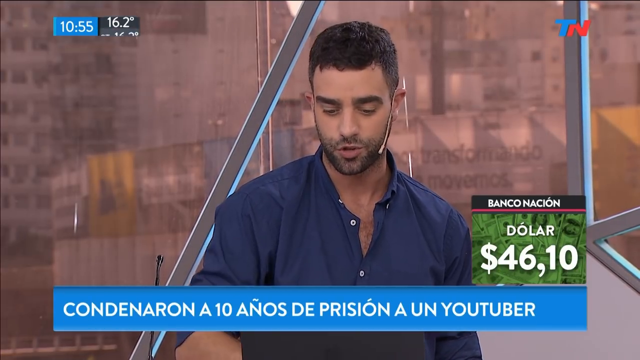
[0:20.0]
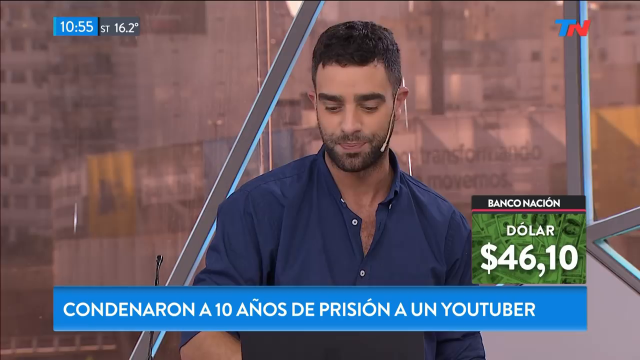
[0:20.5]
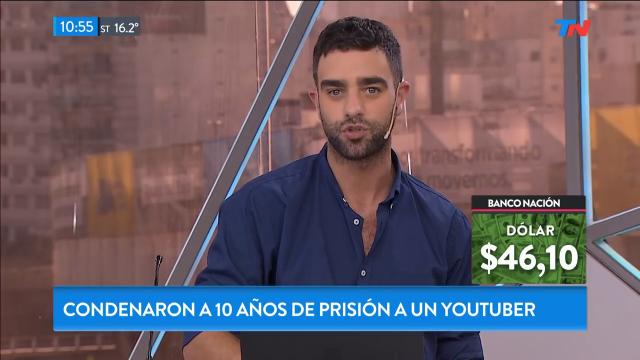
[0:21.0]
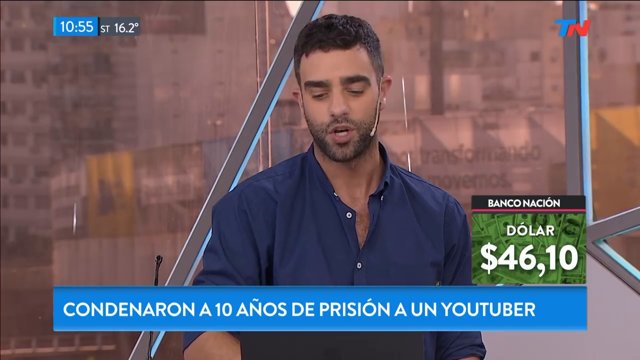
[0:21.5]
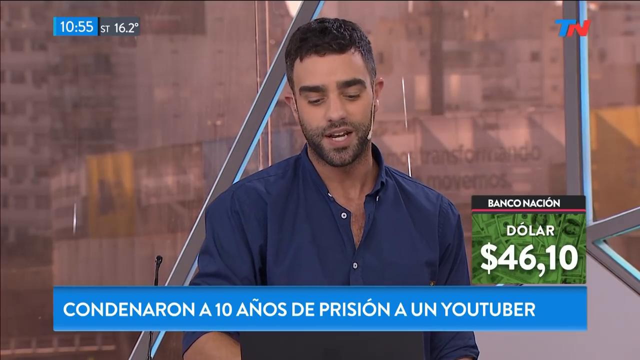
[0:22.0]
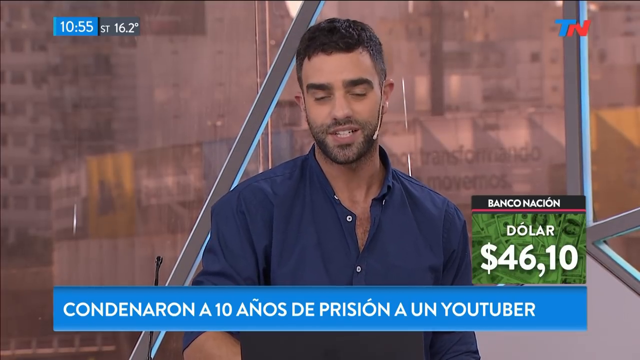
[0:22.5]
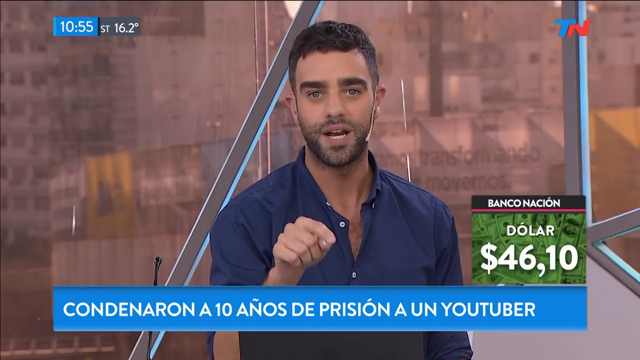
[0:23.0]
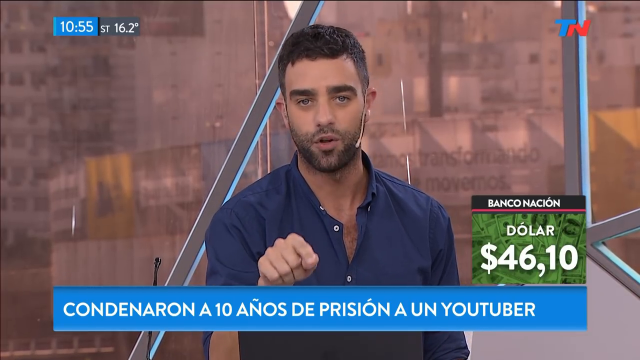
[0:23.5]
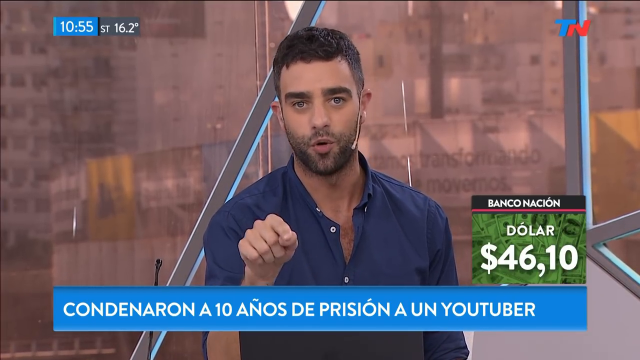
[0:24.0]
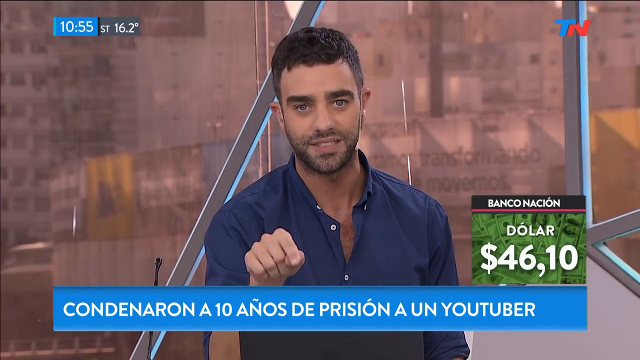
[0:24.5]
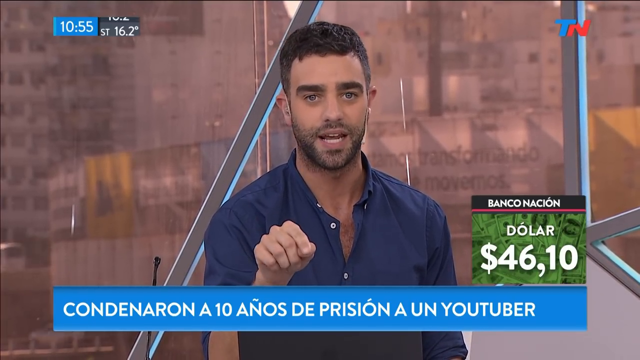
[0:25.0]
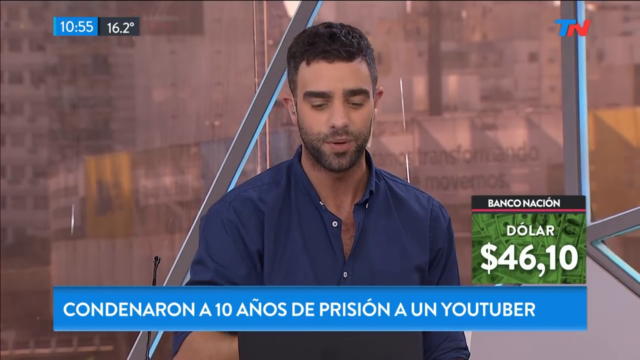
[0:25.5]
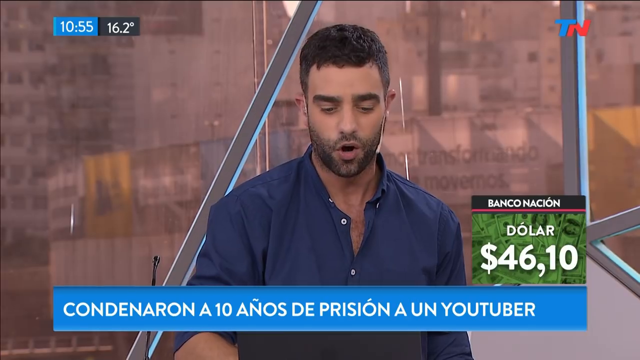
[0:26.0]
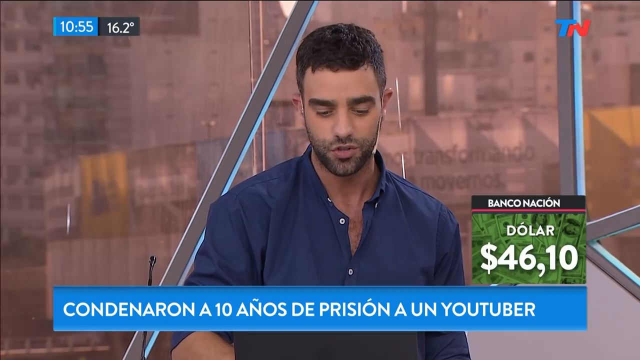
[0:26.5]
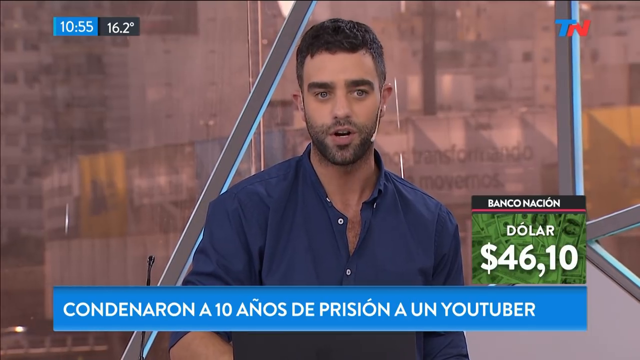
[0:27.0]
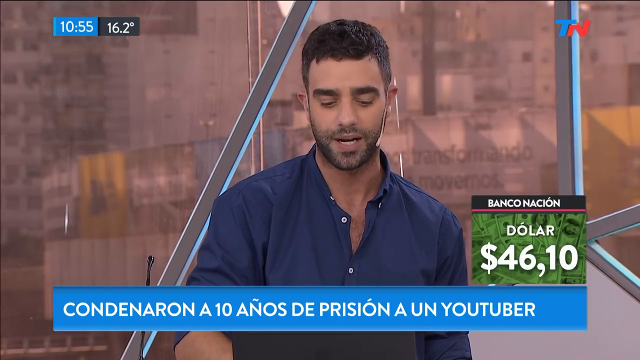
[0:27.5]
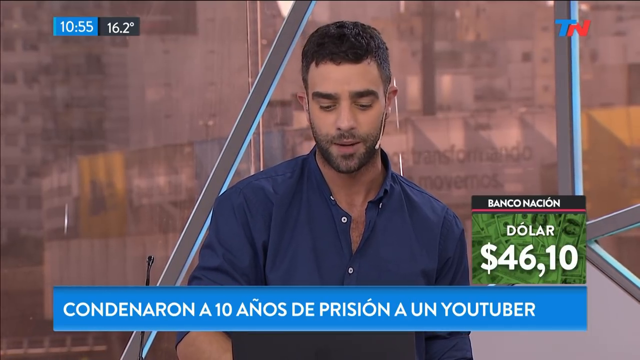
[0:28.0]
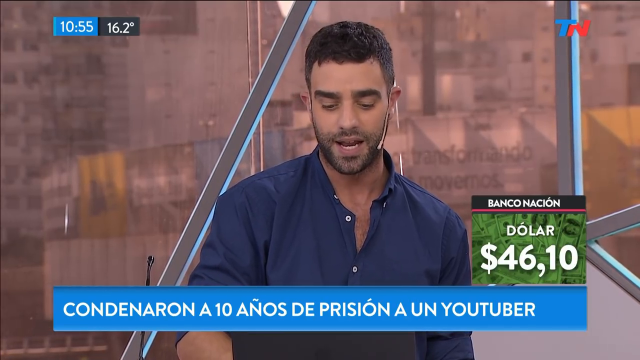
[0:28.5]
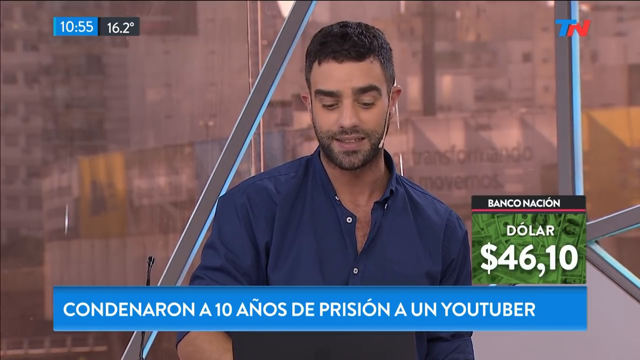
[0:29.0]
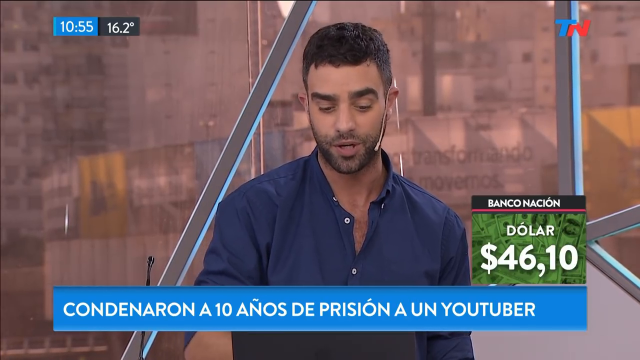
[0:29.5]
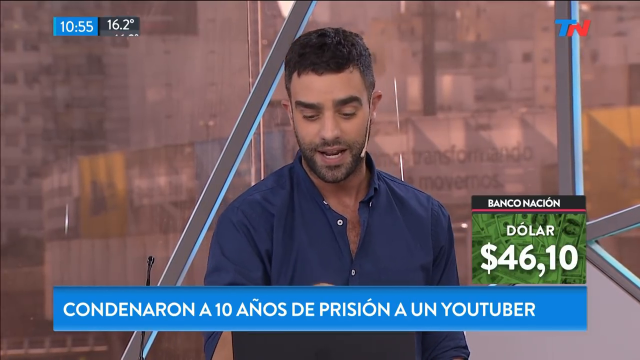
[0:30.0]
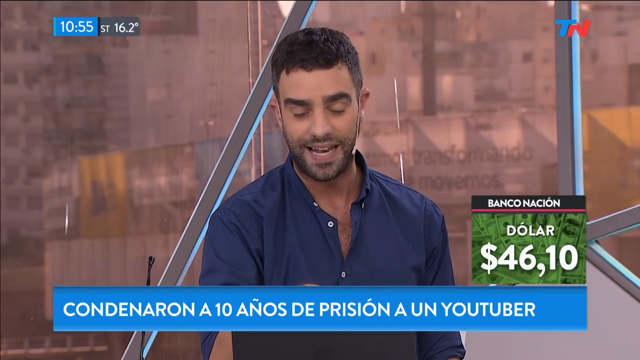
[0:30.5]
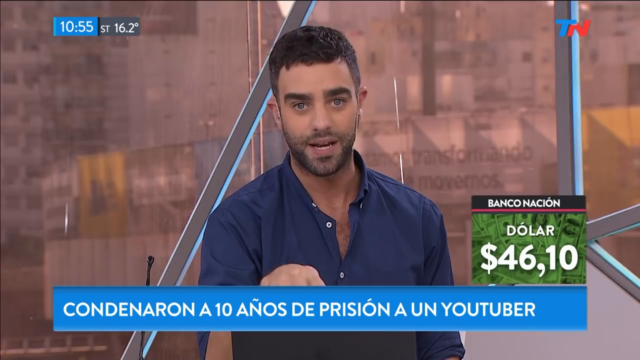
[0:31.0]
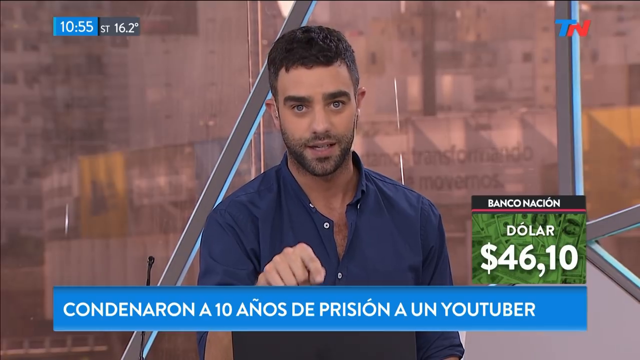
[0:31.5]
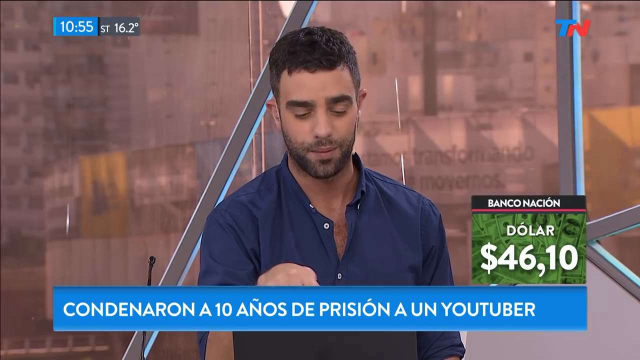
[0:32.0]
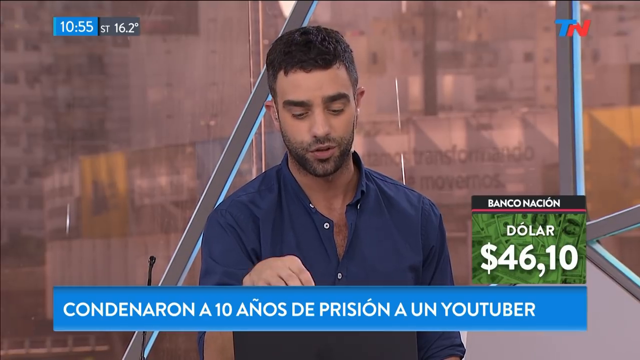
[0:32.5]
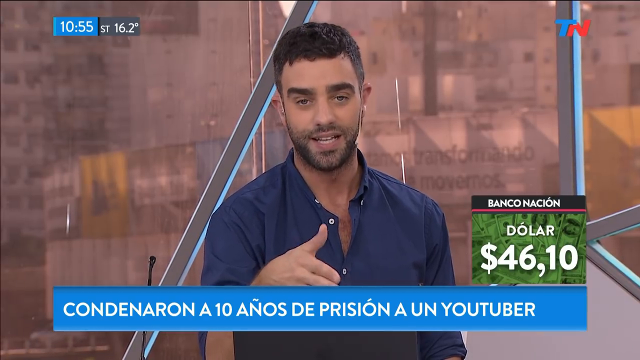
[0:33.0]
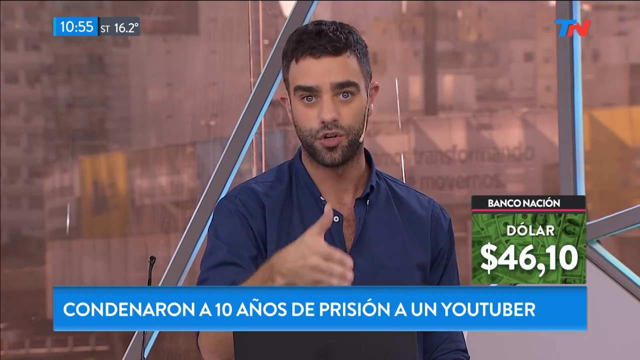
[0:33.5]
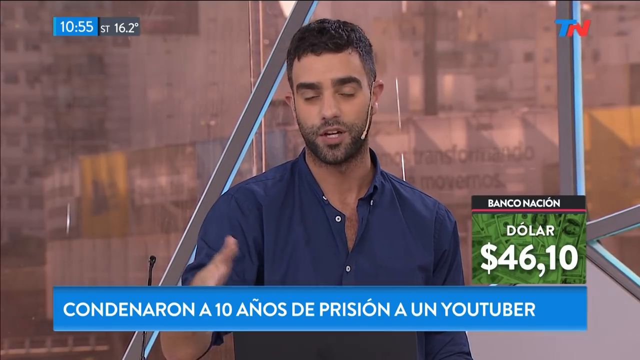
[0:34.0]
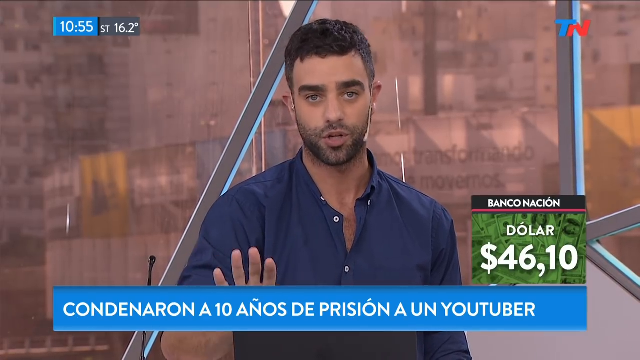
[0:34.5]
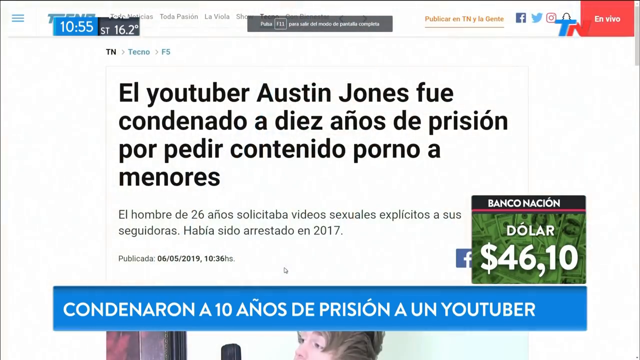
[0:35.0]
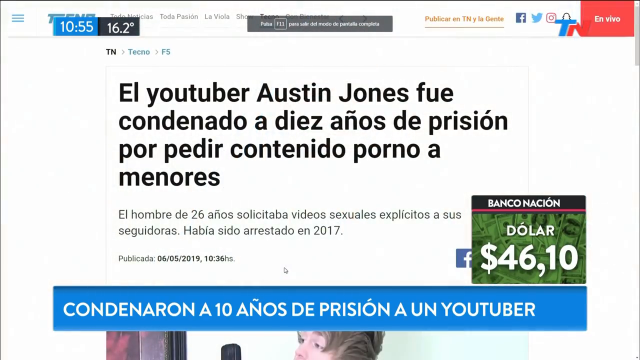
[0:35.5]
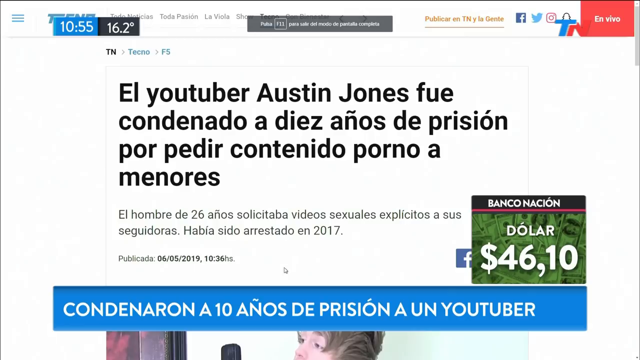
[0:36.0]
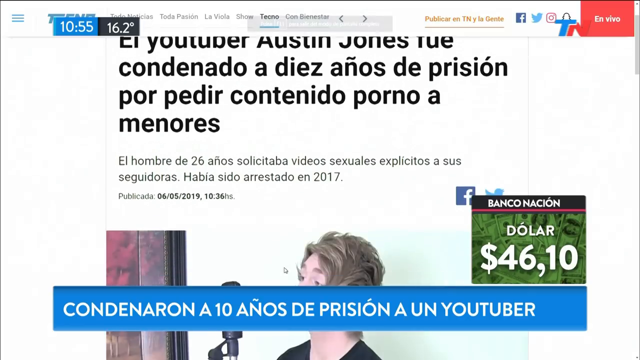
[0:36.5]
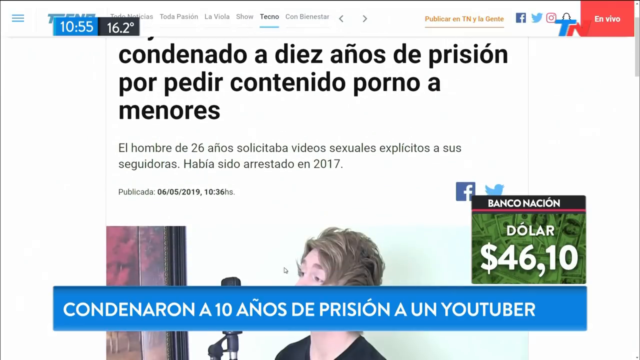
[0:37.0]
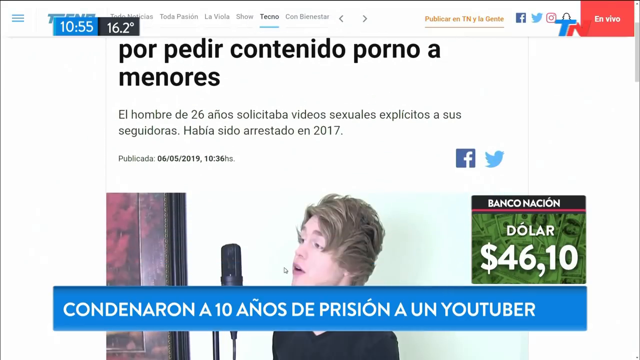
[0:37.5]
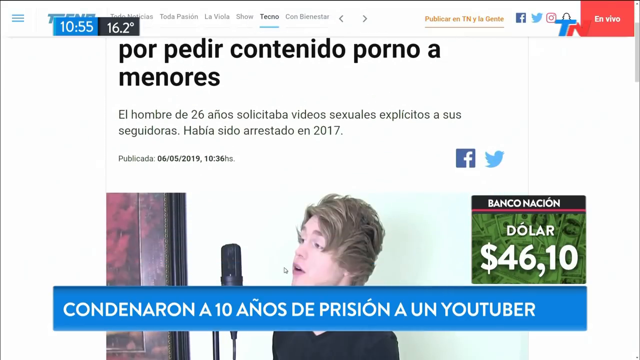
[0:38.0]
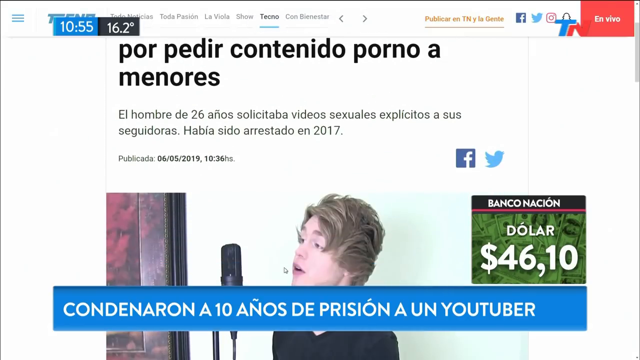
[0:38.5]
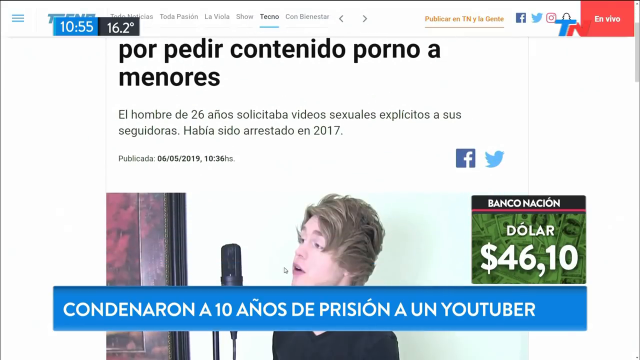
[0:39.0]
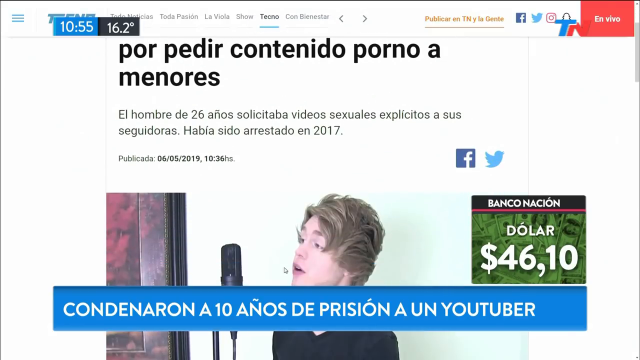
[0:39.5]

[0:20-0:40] The newscaster sits in the news studio, talking. He wears a dark blue shirt with white buttons, and a microphone on the side of his cheek is held on by wrapping around his ear, sort of like a headphone. In the top left of the screen the time is 10:55, with "ST 16.2 degrees." As he talks he occasionally looks down at his laptop screen as if reading from it, then turns back to face the screen and gestures toward it with his right hand. He puts his hands back down and appears to type on his keyboard while looking down at the monitor, and he also moves a hand from side to side in front of him as he talks. A news story in Spanish comes up on the screen, beginning "El YouTuber Austin Jones fue condenado a 10 años de prisión."